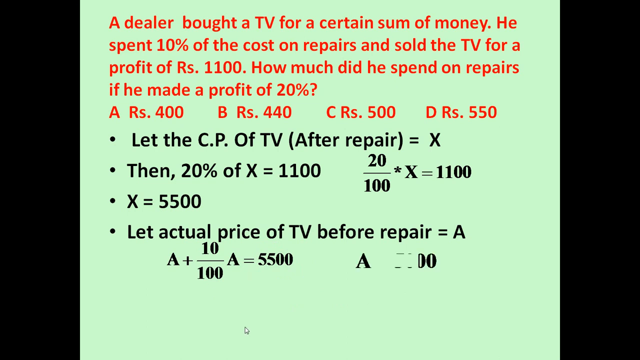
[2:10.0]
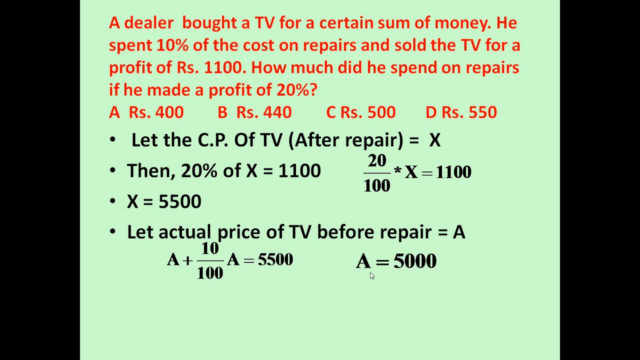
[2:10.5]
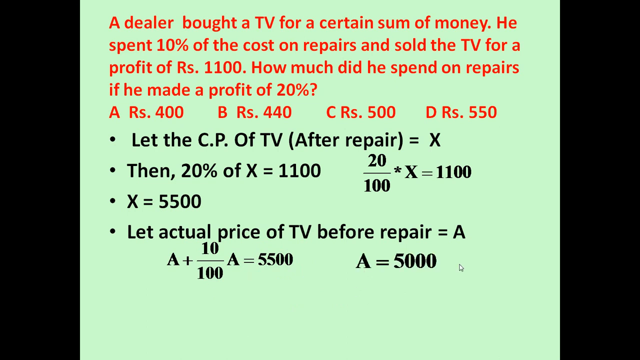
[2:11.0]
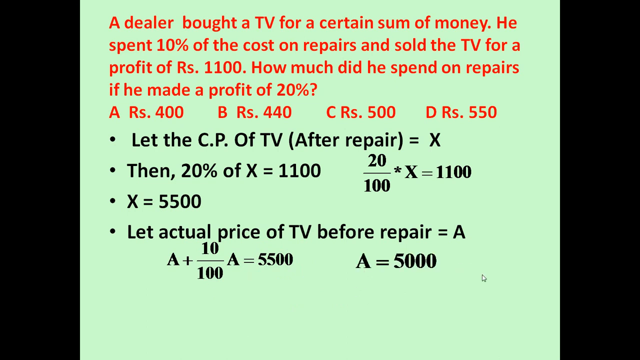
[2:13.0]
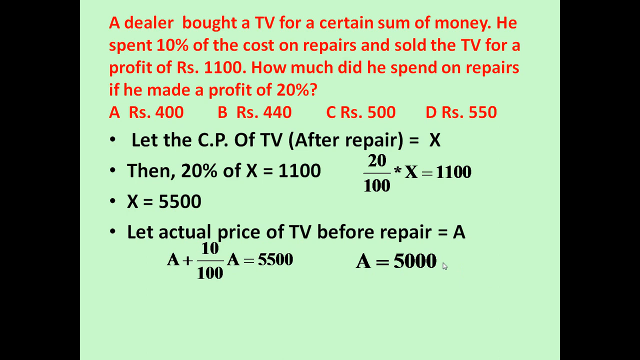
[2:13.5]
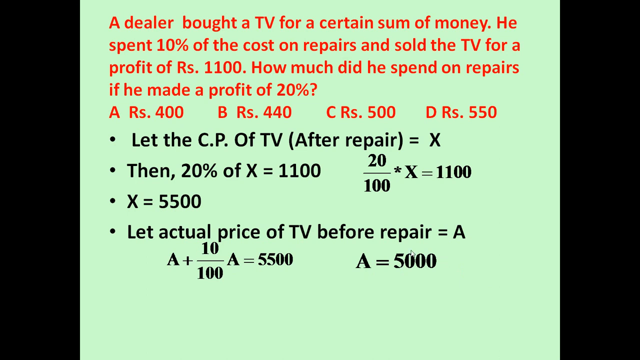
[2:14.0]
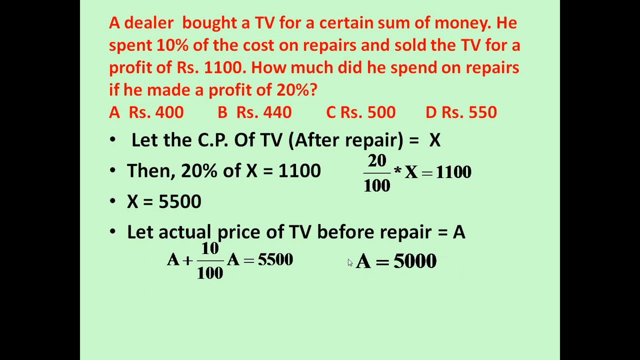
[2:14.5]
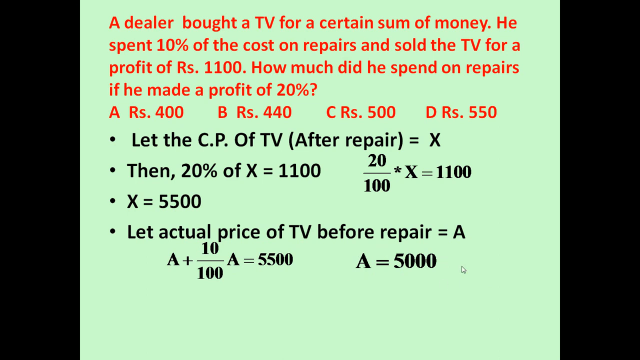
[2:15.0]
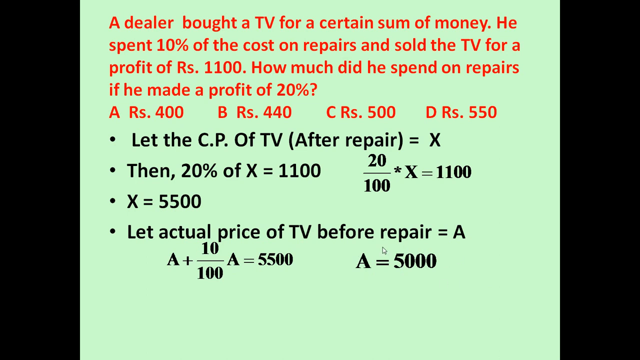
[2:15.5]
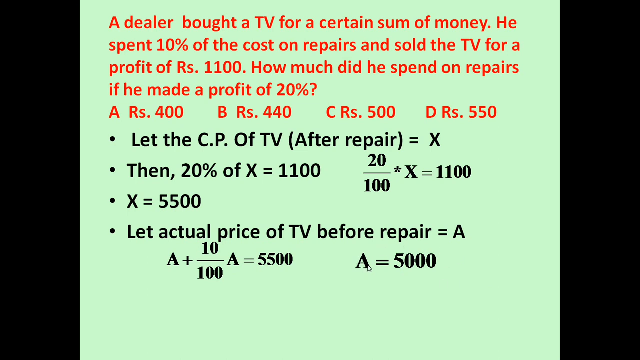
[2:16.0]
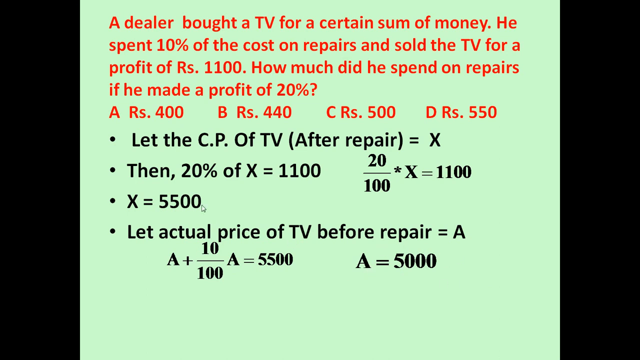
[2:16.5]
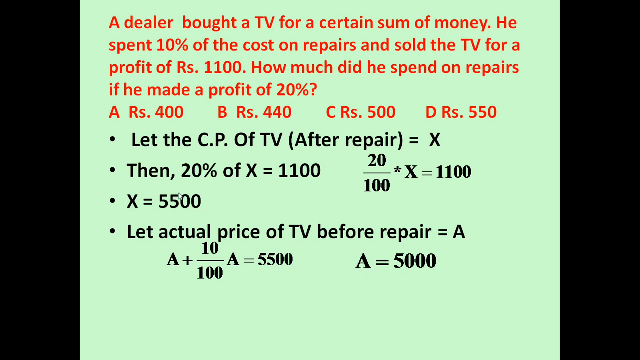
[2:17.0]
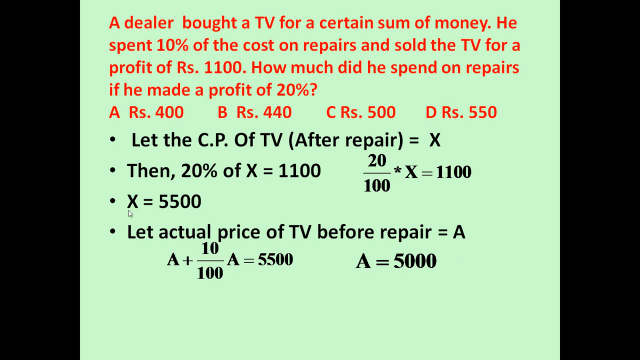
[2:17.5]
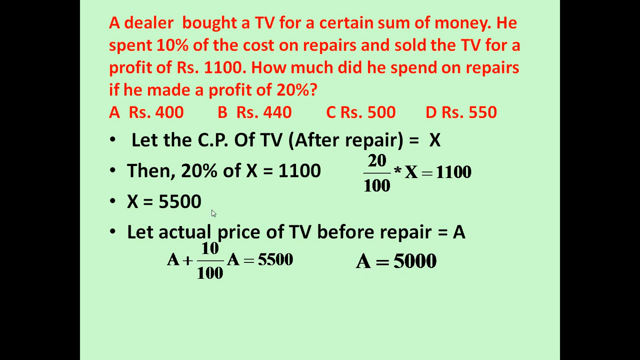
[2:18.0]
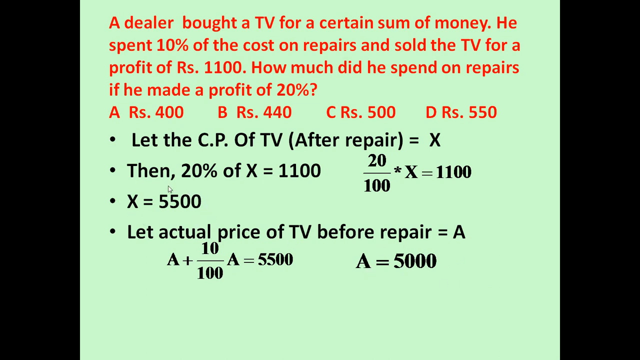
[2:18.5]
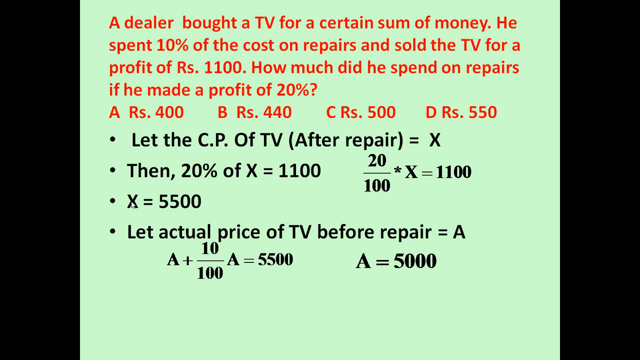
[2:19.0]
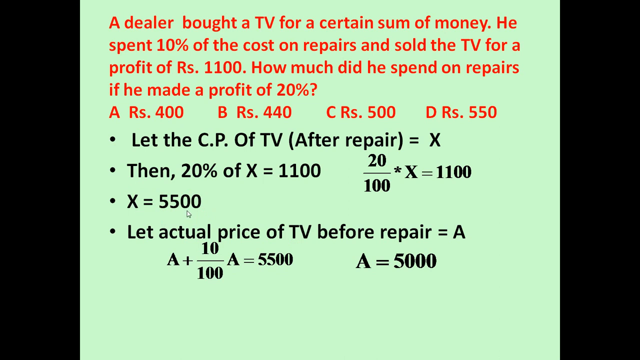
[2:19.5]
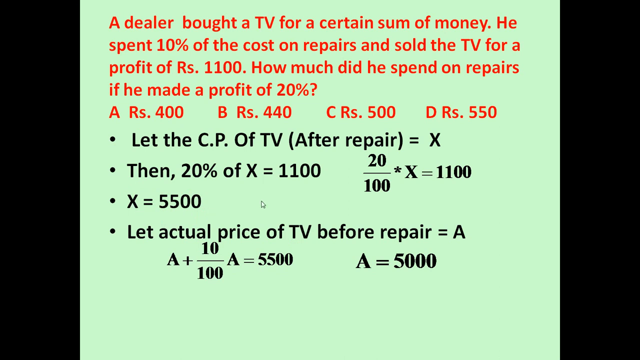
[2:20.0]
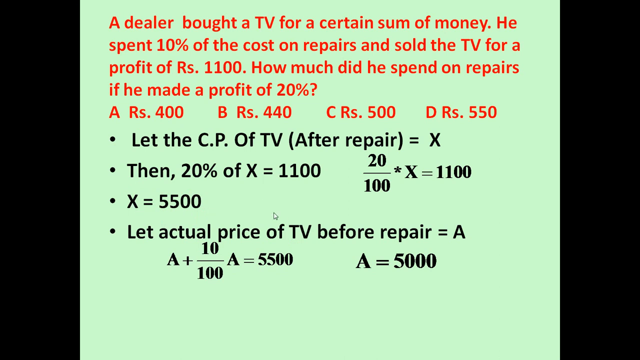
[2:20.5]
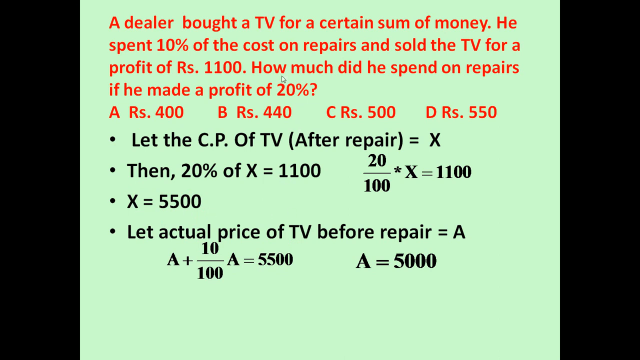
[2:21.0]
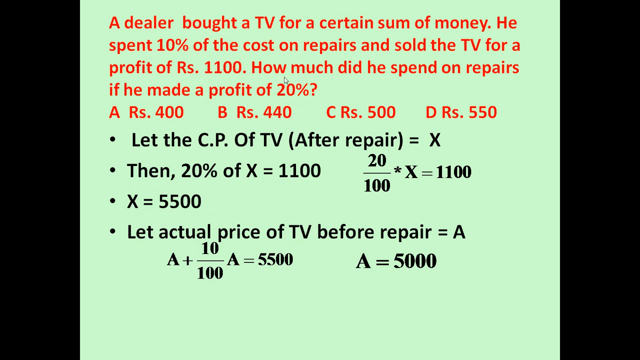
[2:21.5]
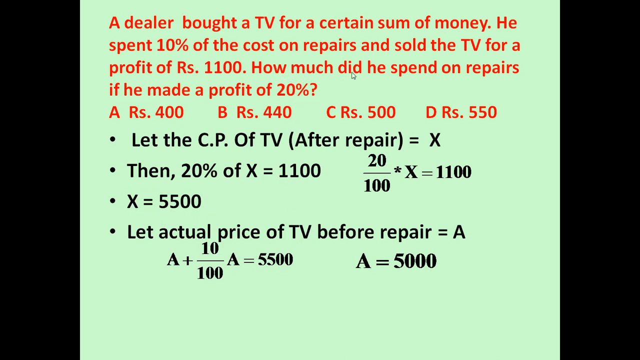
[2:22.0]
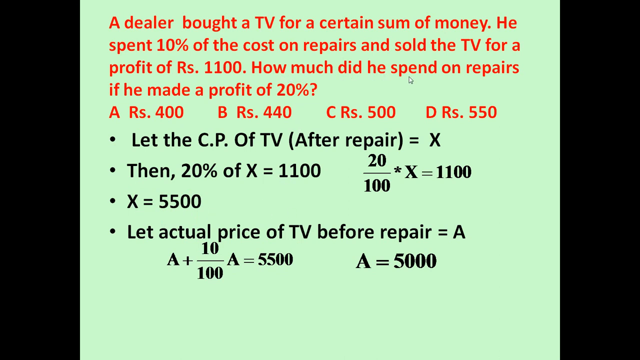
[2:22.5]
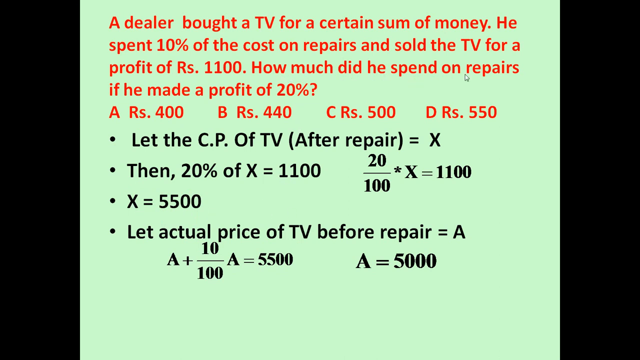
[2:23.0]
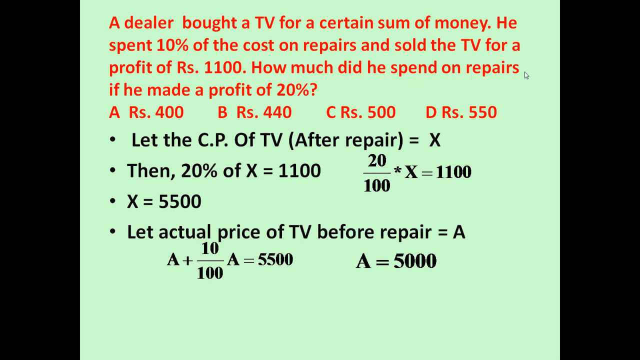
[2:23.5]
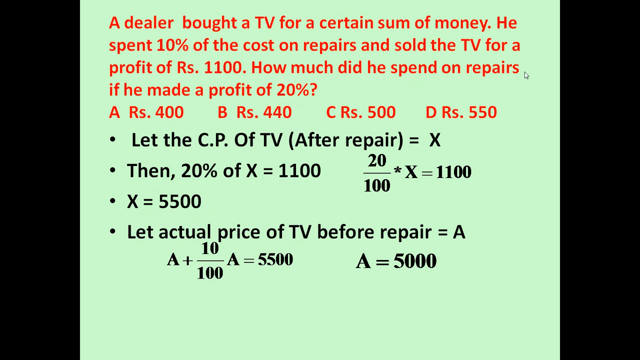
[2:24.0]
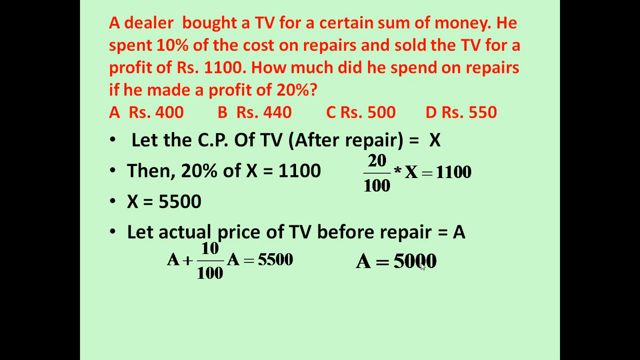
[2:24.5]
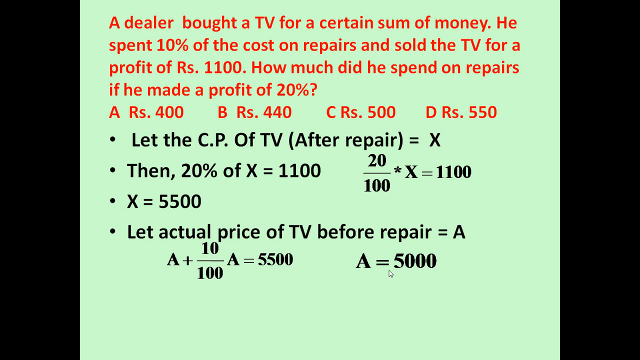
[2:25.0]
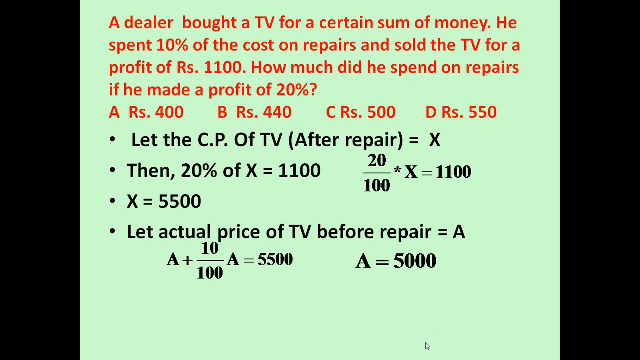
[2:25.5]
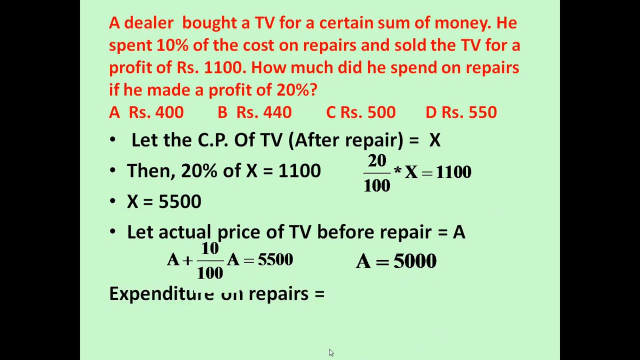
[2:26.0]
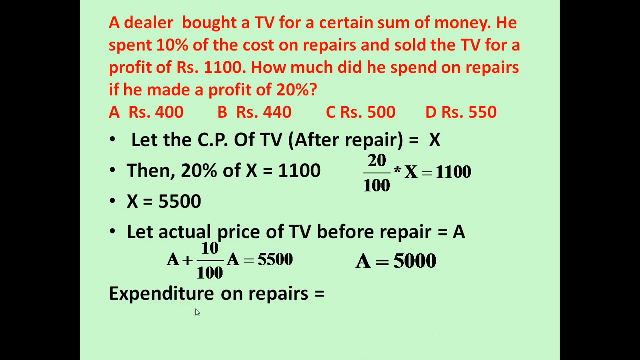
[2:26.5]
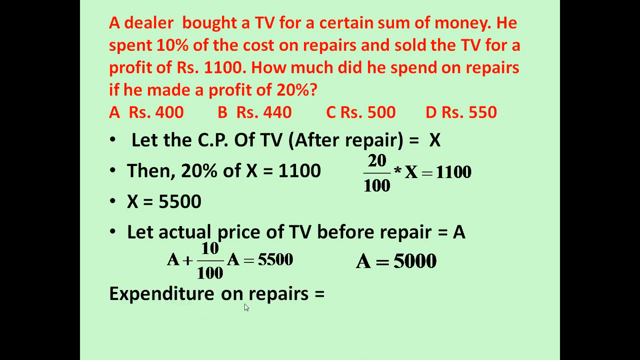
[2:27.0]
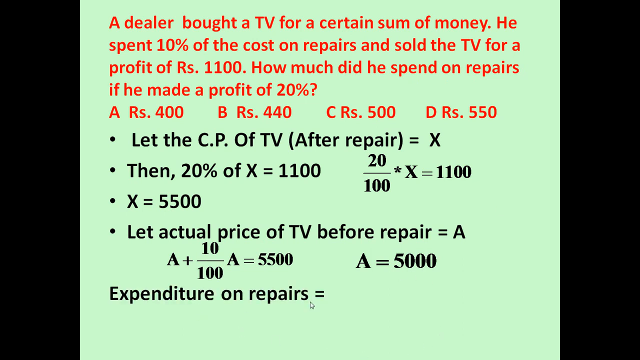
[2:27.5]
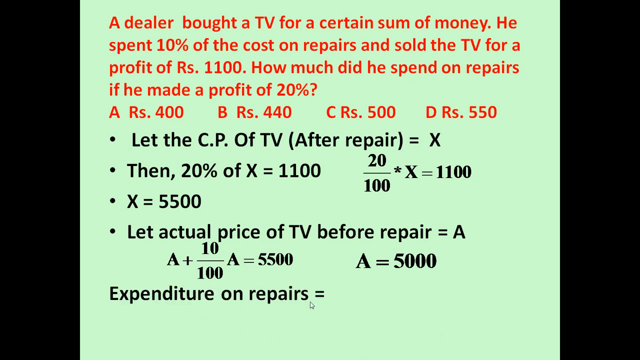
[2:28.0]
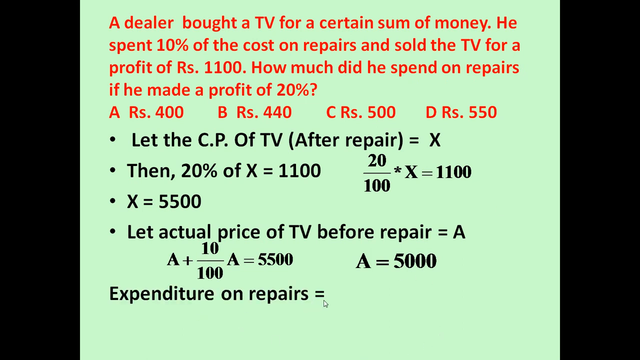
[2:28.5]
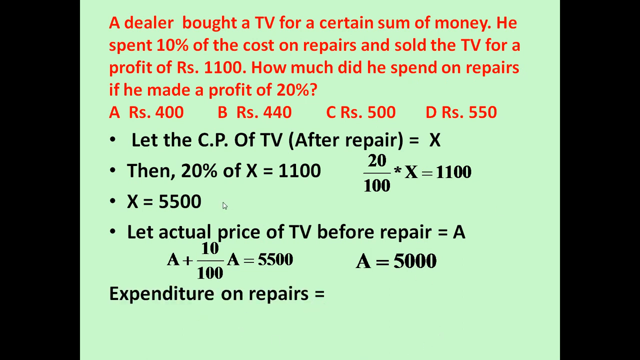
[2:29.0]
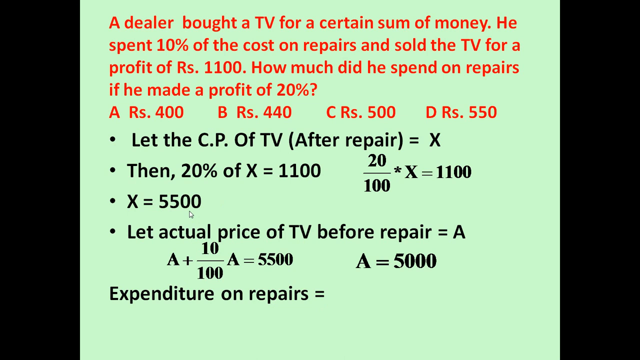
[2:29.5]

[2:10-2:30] A teacher helps solve a math problem. First, a picture of an Indian man named A.K. Agarwal appears, and text says "this is the A.K. Agarwal aptitude series about profit and loss number four". A red border surrounds his name and picture. Next, the math problem is shown in red with four possible answers, A to D. The question says: "a dealer bought a tv for a certain amount of money he spent 10 percent of the cost on repairs and sold the tv for a profit of Rs. 1100. How much did he spend on repairs if he made a profit of 20%?" The options are A, 400; B, 440; C, 500; D, 550. The question is then solved, typed in black, concluding that the answer is C, Rs. 500.